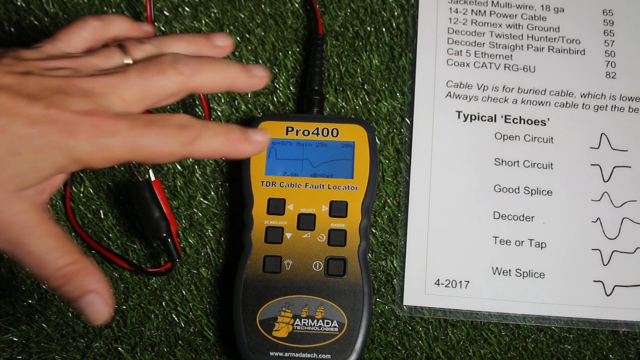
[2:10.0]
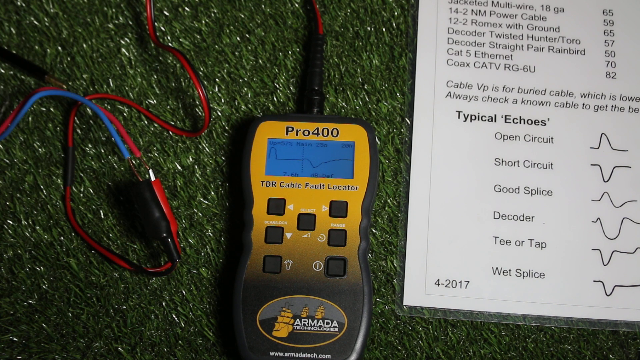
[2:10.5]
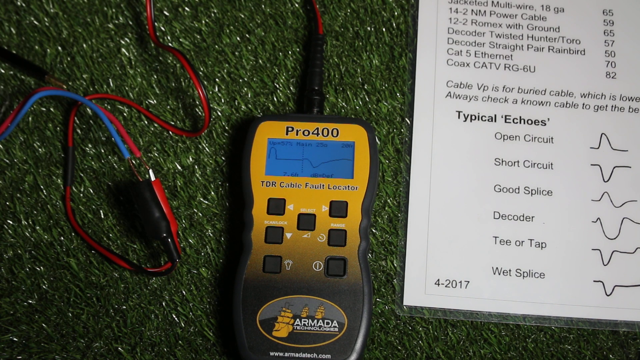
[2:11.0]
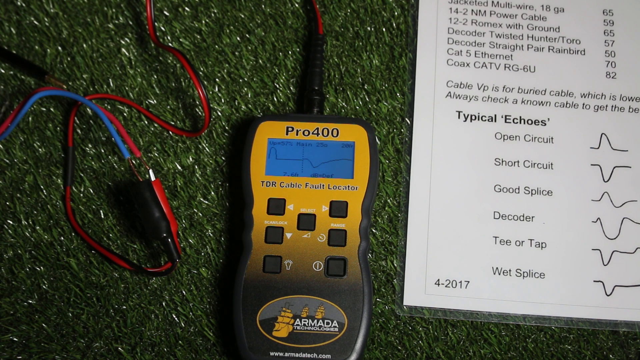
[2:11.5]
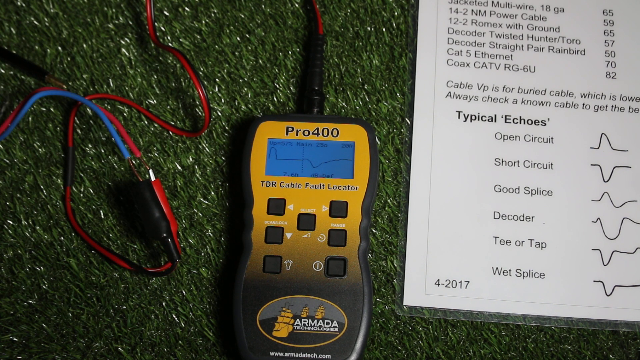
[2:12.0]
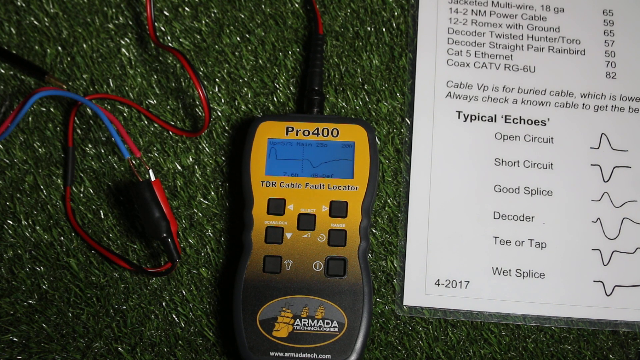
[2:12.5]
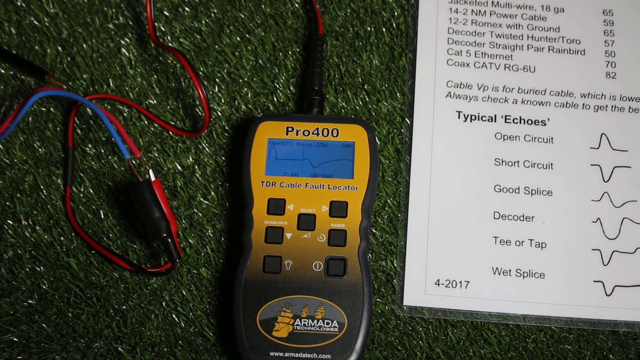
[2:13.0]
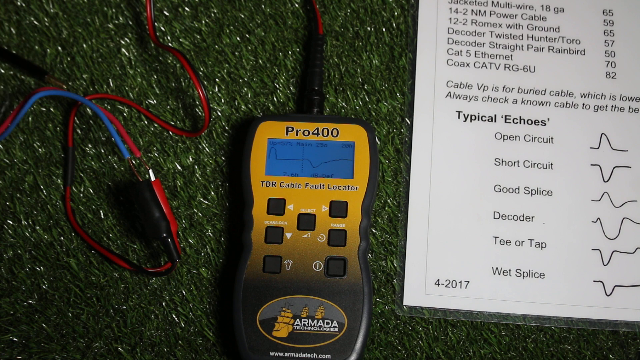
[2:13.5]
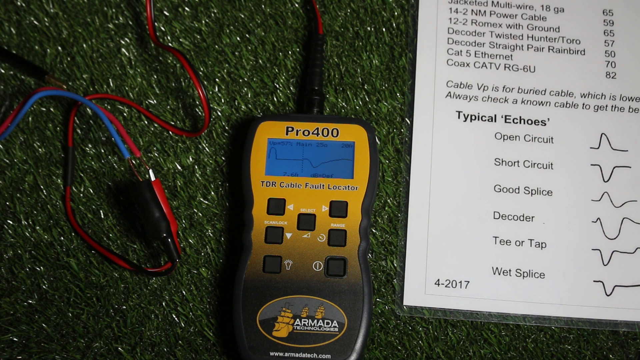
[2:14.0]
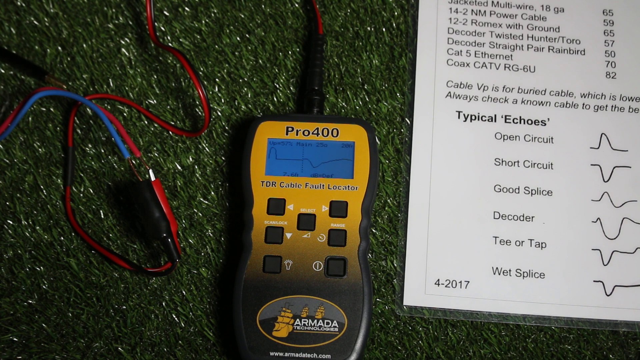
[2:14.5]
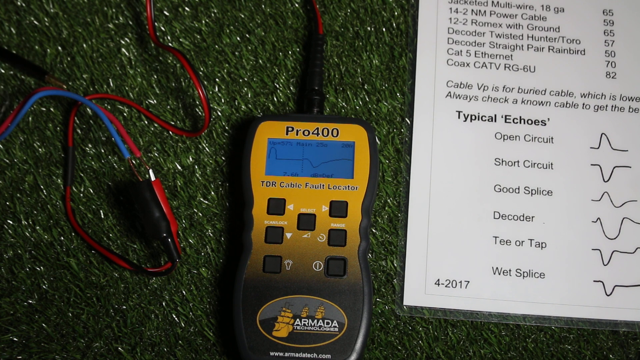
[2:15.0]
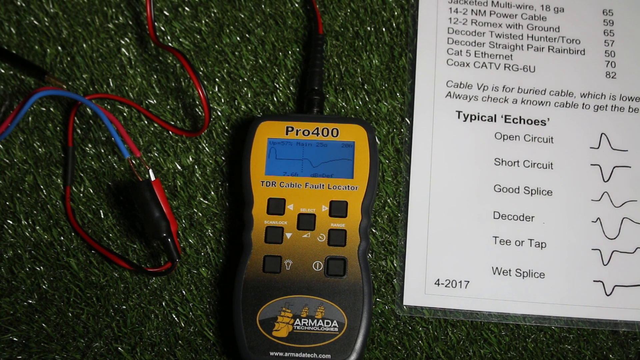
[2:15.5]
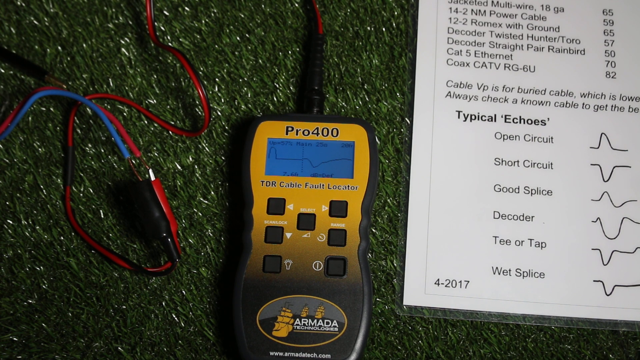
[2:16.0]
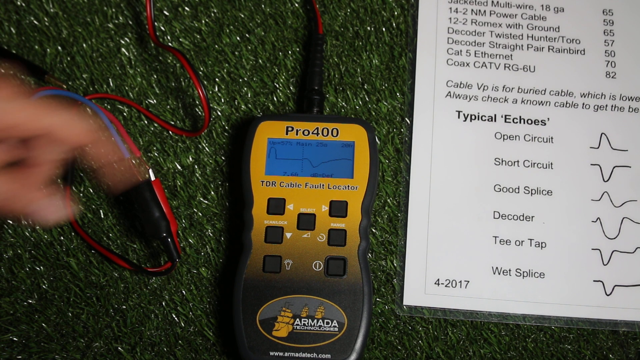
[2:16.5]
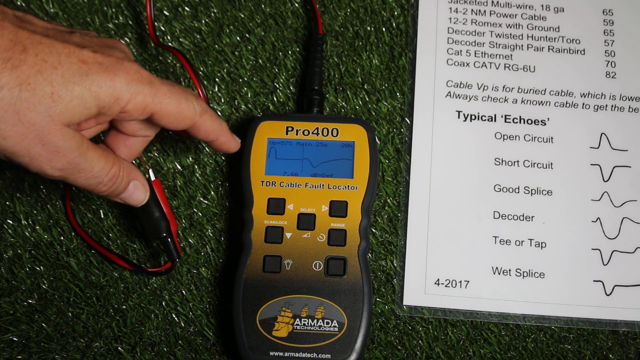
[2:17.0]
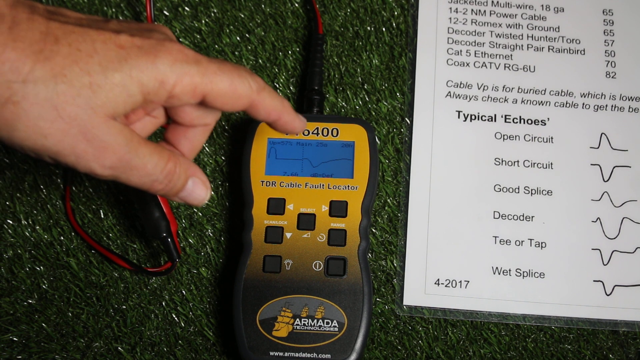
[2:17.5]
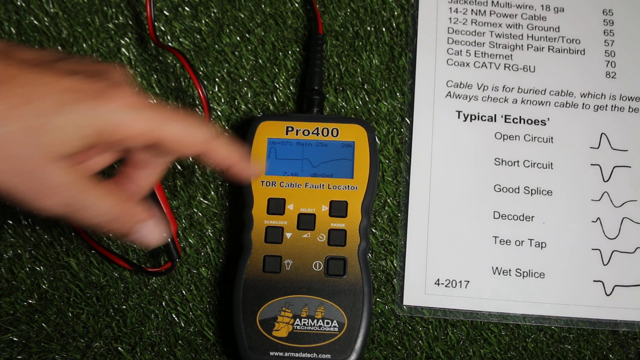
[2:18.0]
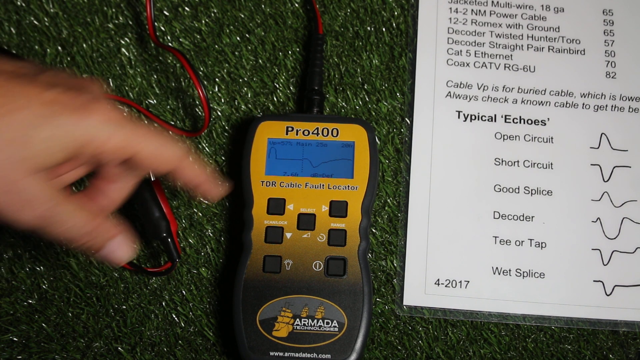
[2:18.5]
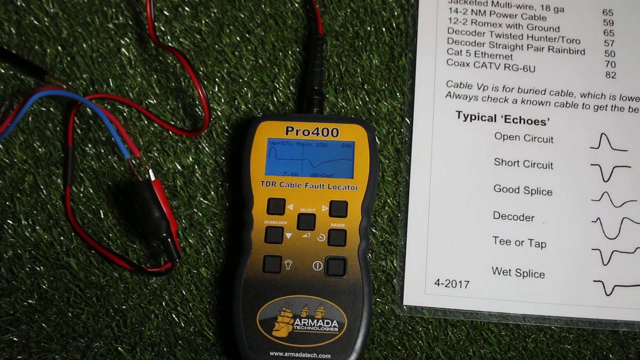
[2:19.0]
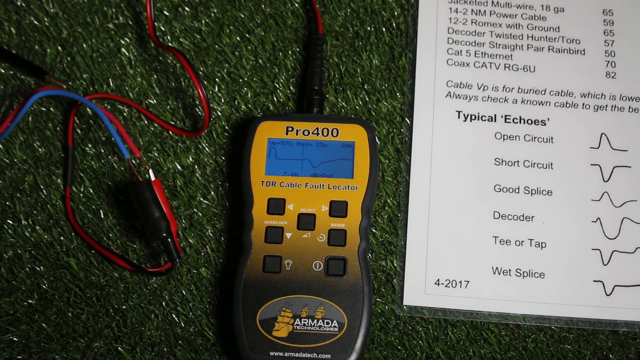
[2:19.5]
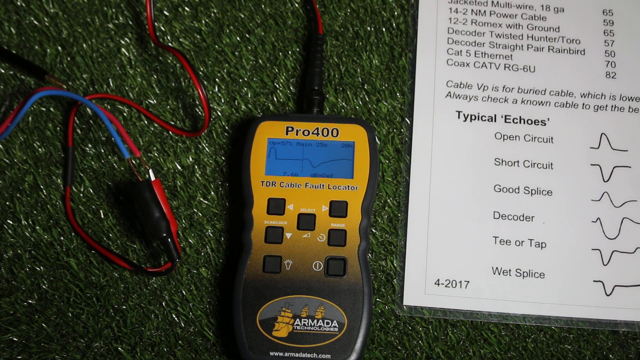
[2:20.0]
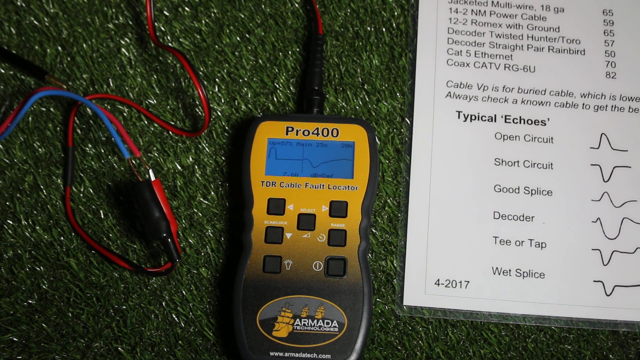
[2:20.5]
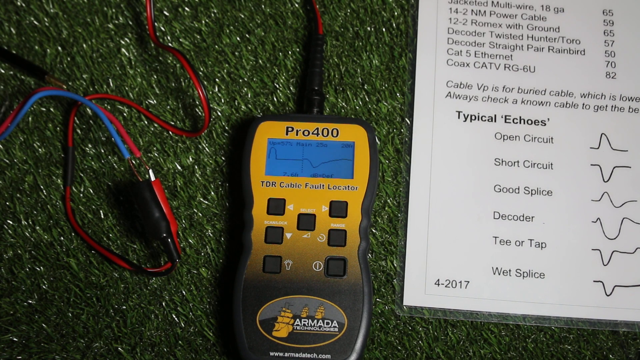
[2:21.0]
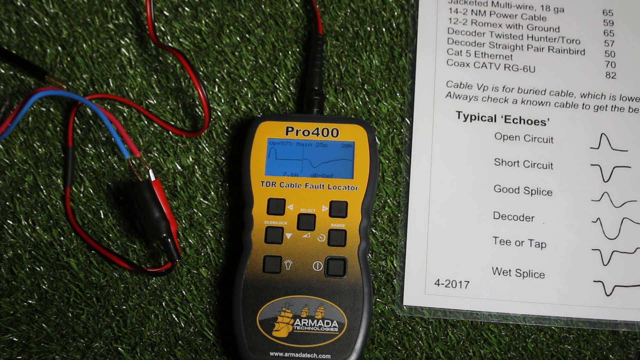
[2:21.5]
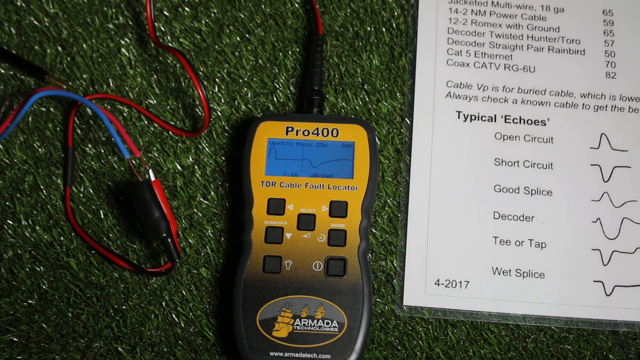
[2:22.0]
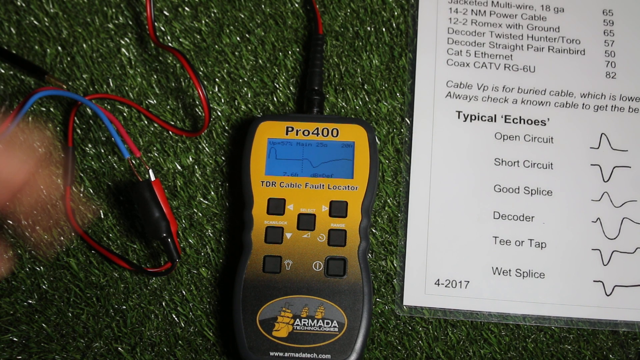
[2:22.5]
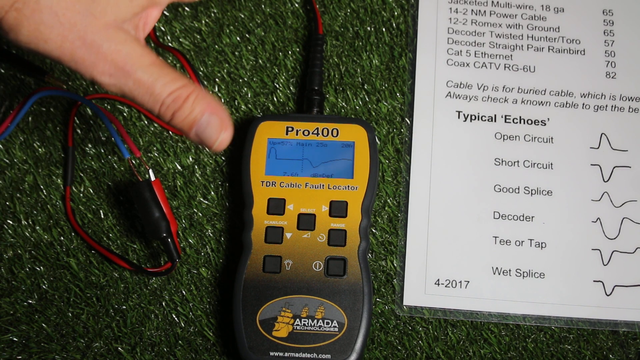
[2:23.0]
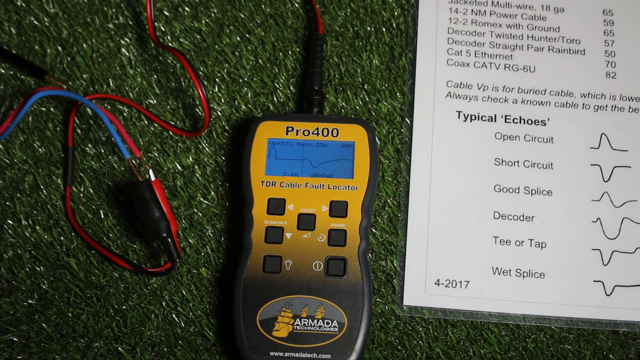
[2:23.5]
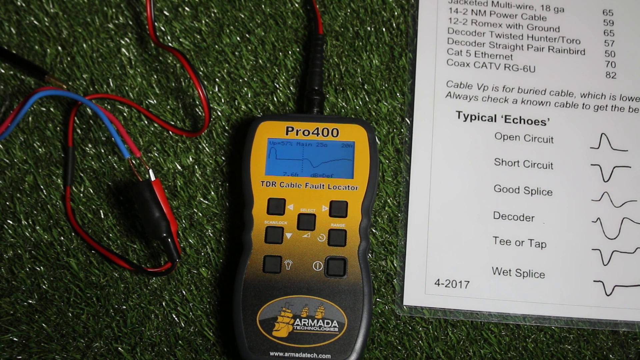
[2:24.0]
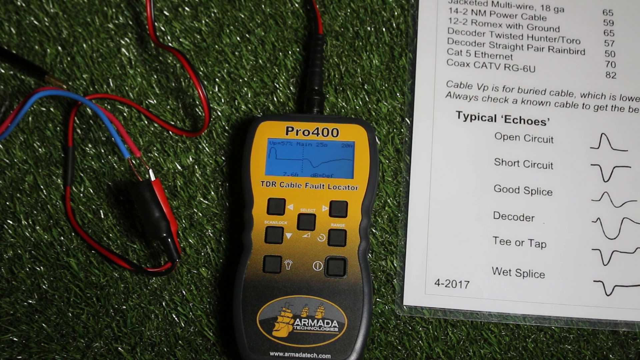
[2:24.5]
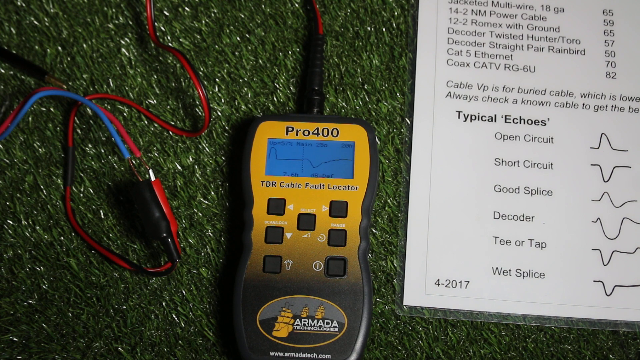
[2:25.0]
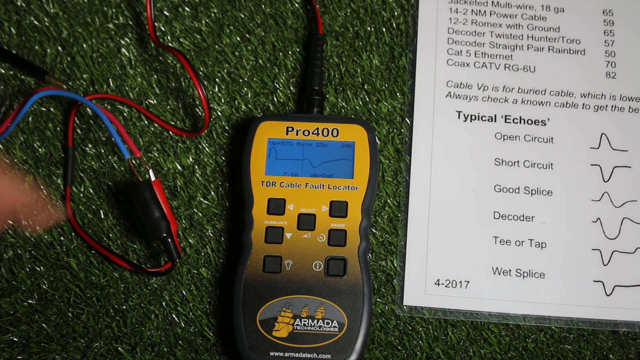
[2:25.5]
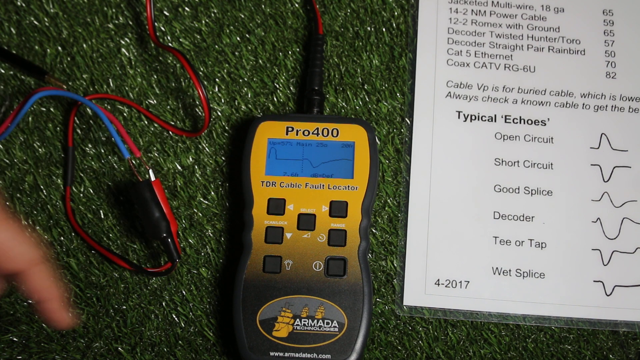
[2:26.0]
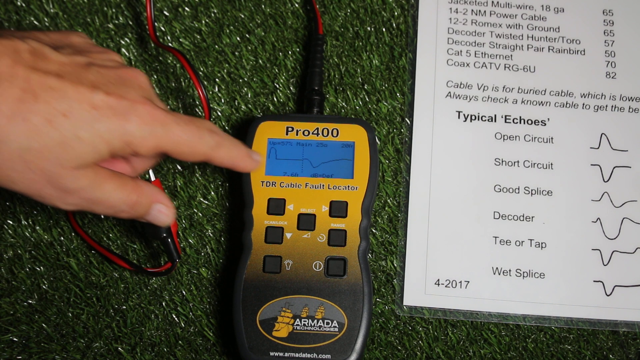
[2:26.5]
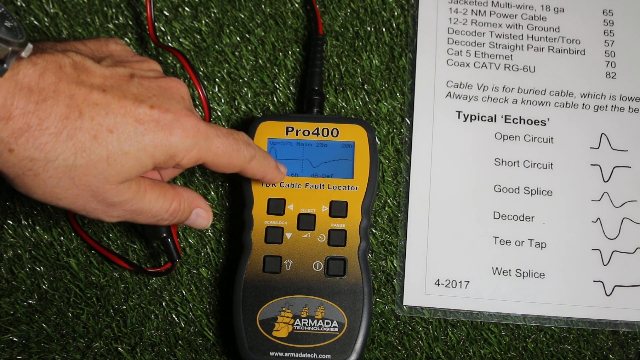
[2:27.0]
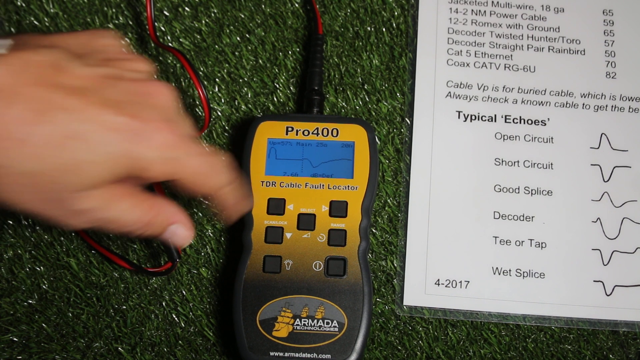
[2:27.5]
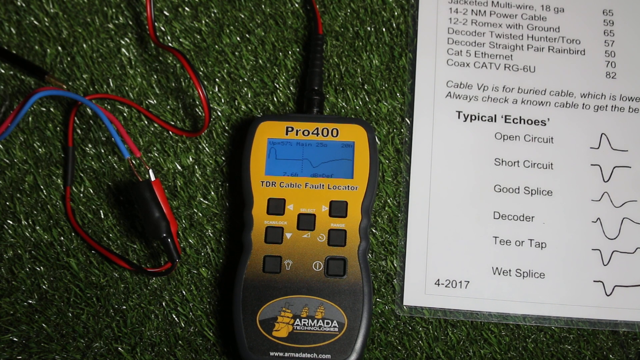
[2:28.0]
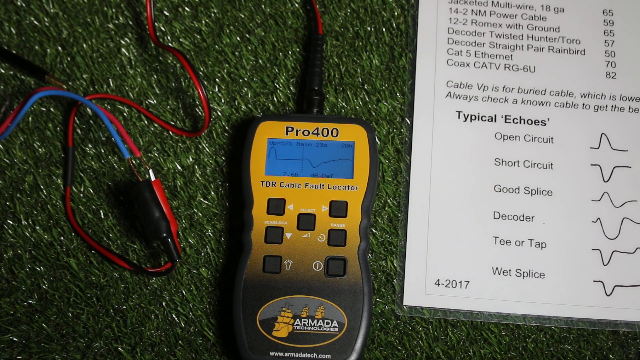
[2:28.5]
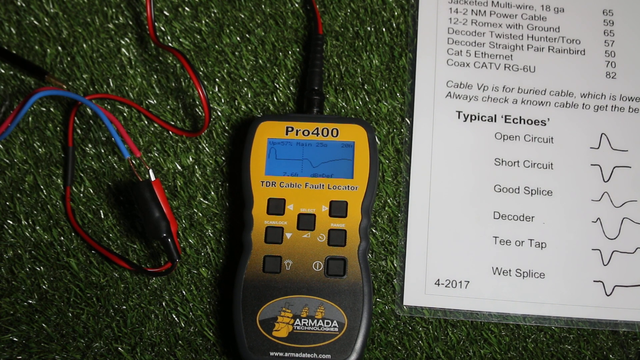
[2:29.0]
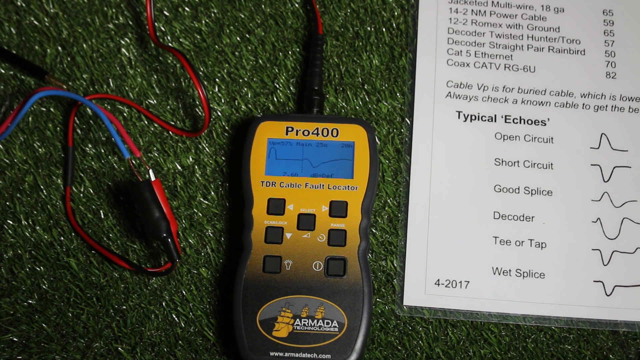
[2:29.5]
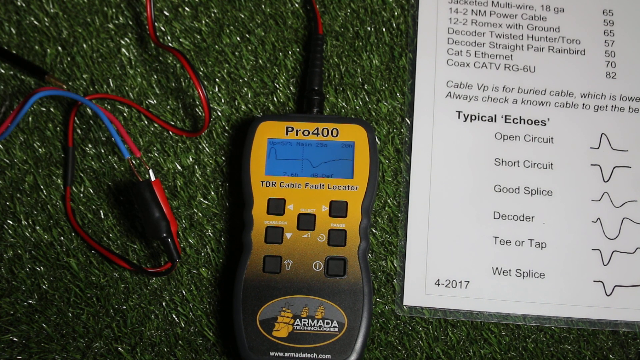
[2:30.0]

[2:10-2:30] A yellow Pro 400 device has a screen in the top showing lines that zigzag, then dip down and do a little zigzag to the right. Red wires are attached, with a shorter blue wire attached to the red. A man's hand goes in and out of the frame, touching the Pro 400 and pointing to the screen. His hand kind of wavers, disappears, comes back briefly, disappears, points to the screen again, and disappears once more. He wears a wedding ring and a black watch band with a very large watch face. To the right of the device is a piece of paper explaining different ways the echoes, the waves on the screen, can look, naming them "open circuit", "short circuit", "good splice", "decoder", "tear tap" and "wet splice", with a diagram of what each would look like on the screen.